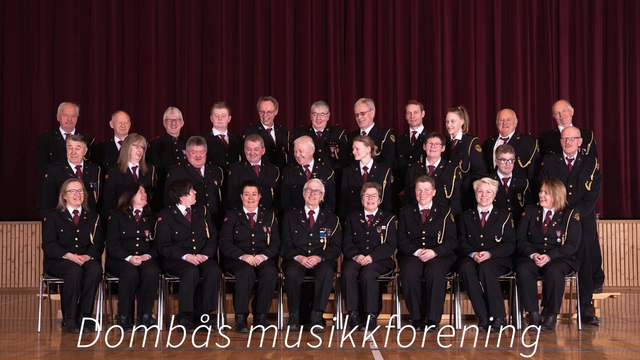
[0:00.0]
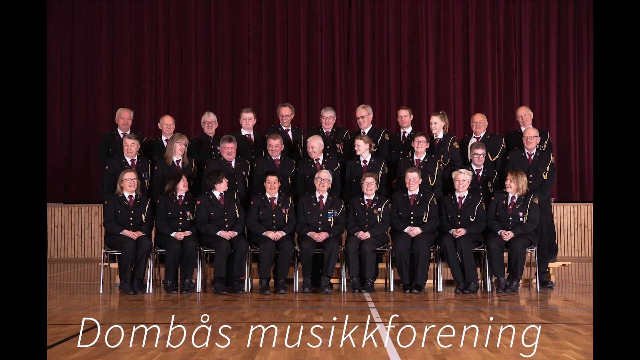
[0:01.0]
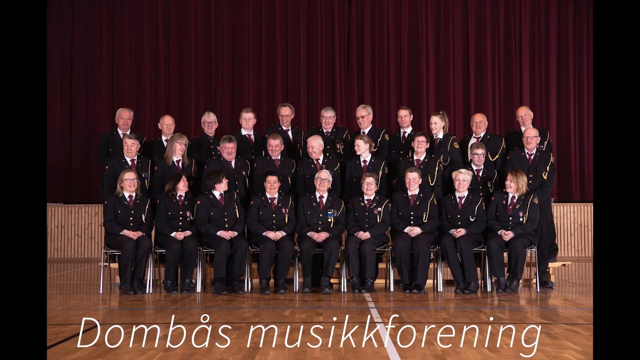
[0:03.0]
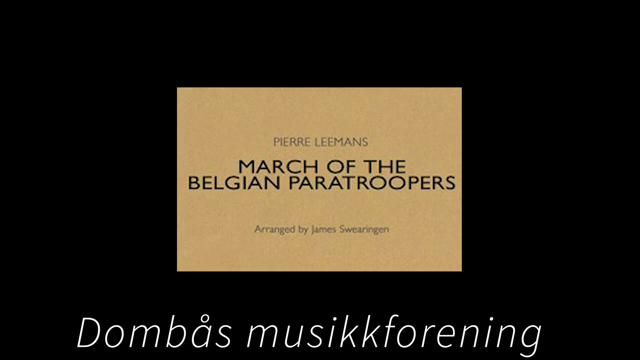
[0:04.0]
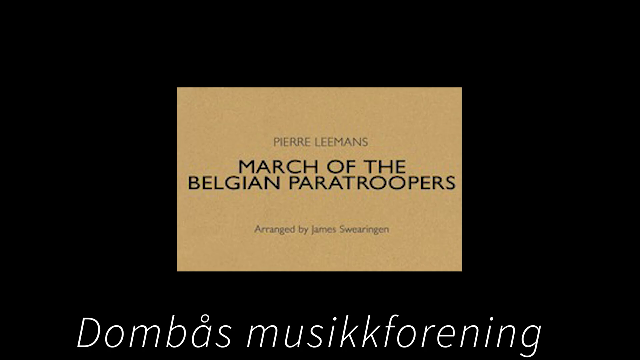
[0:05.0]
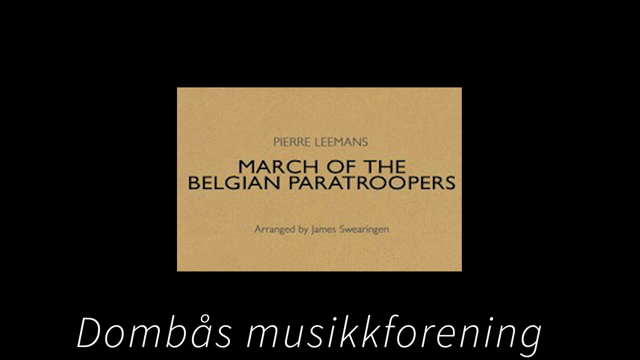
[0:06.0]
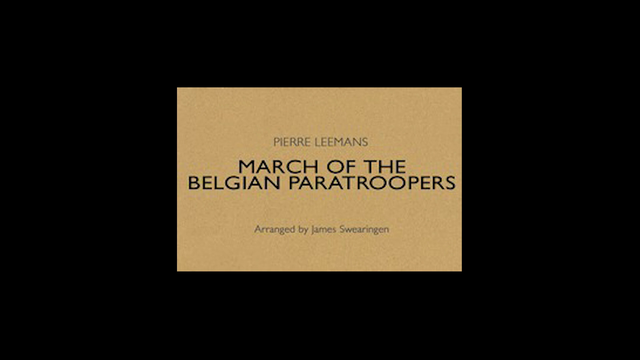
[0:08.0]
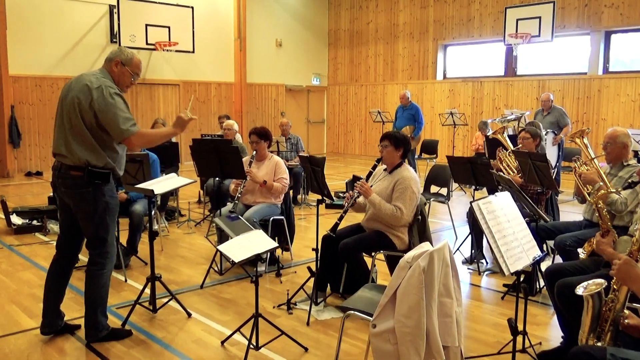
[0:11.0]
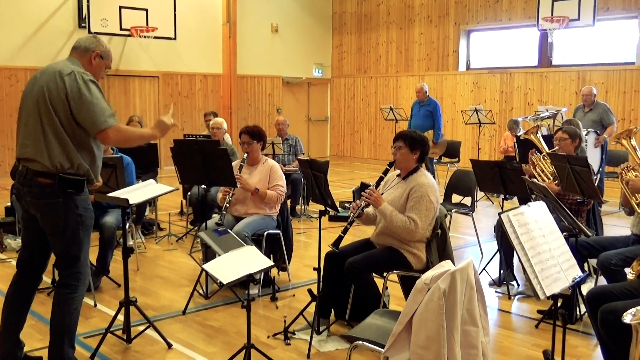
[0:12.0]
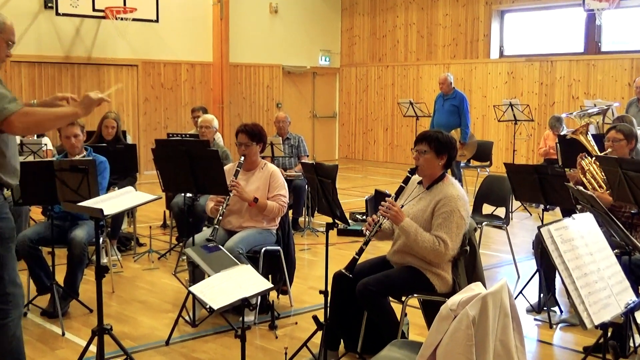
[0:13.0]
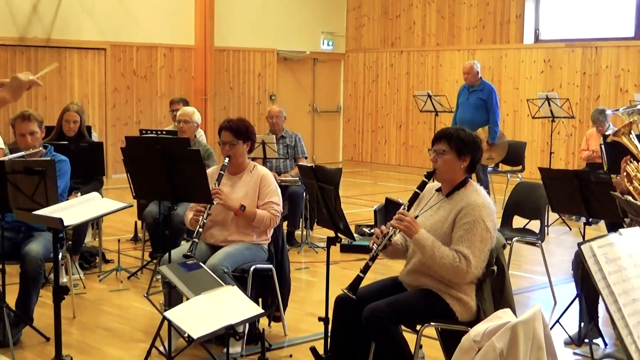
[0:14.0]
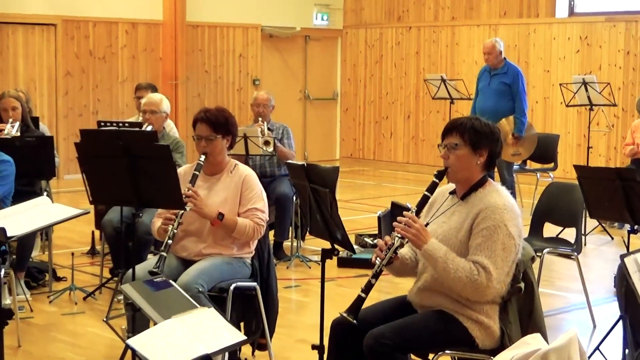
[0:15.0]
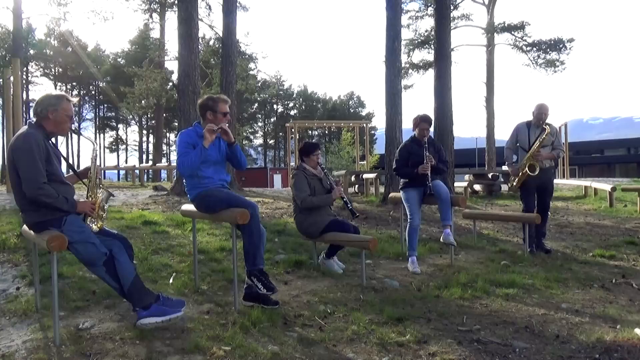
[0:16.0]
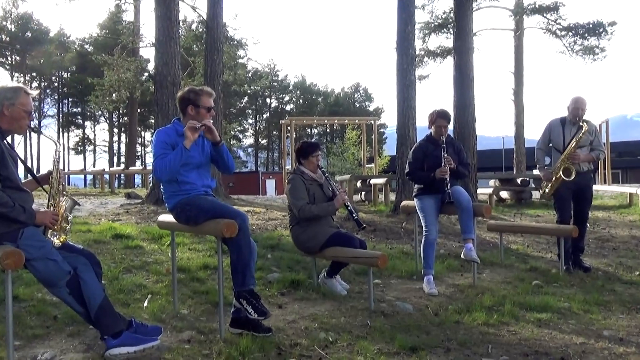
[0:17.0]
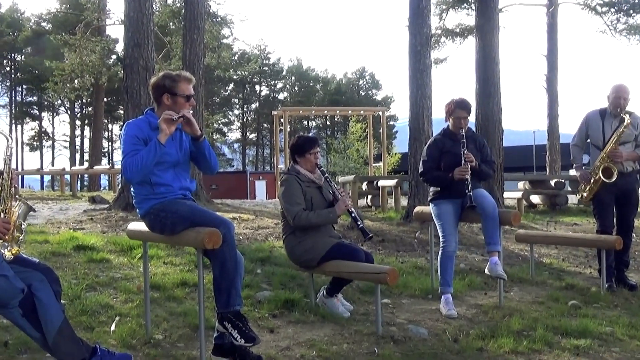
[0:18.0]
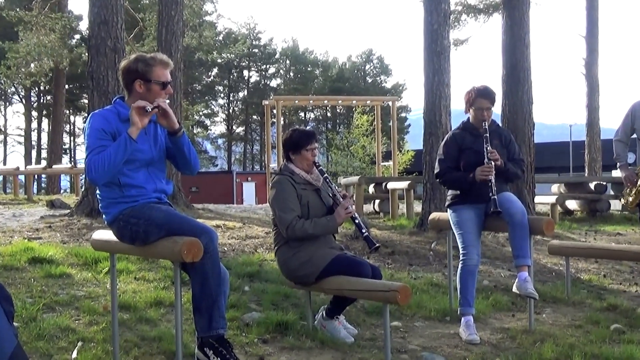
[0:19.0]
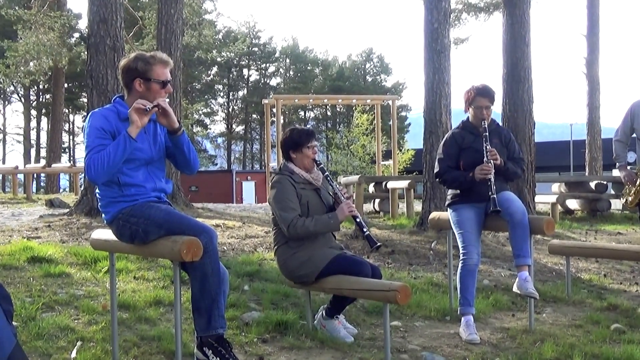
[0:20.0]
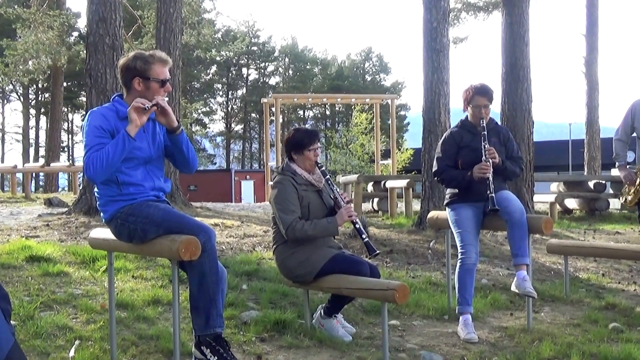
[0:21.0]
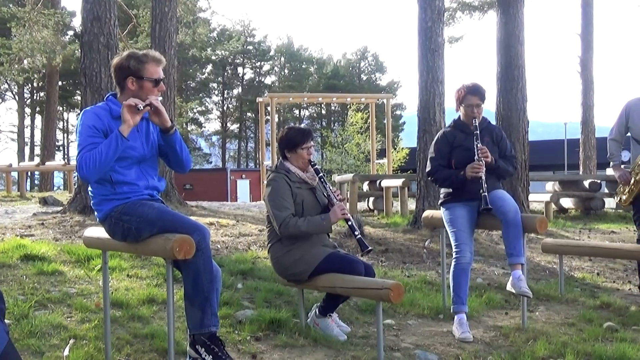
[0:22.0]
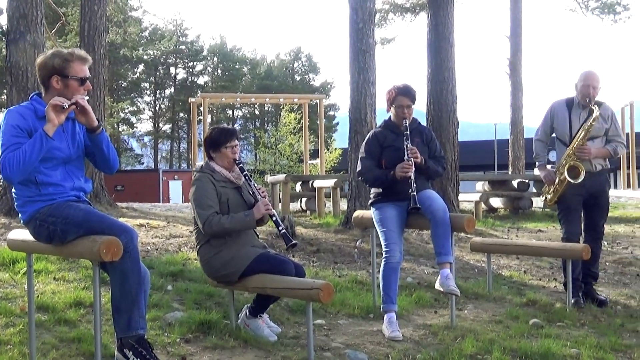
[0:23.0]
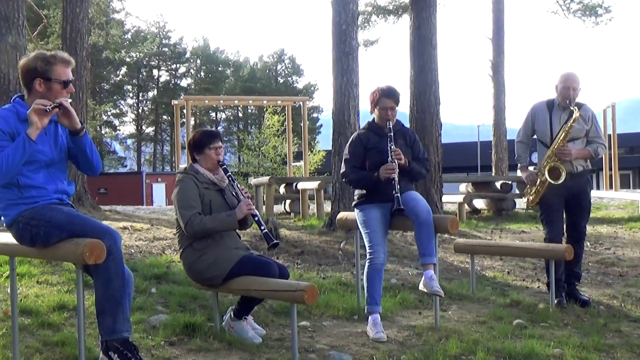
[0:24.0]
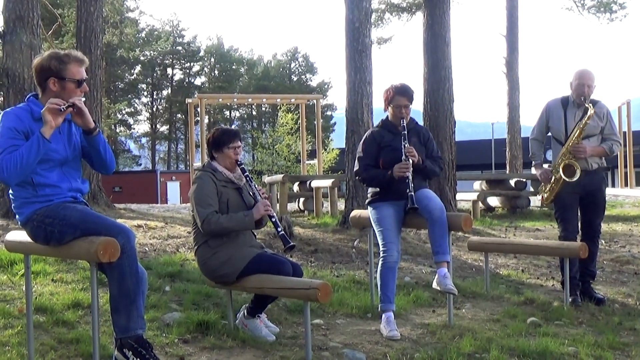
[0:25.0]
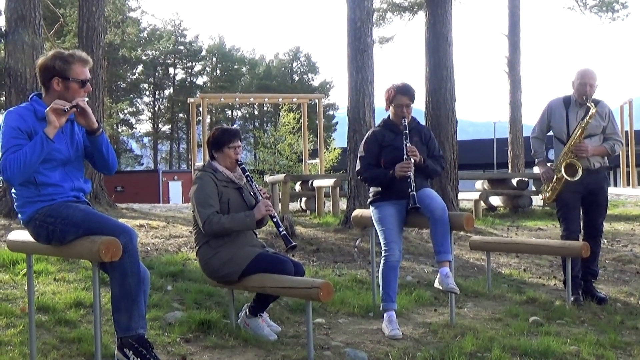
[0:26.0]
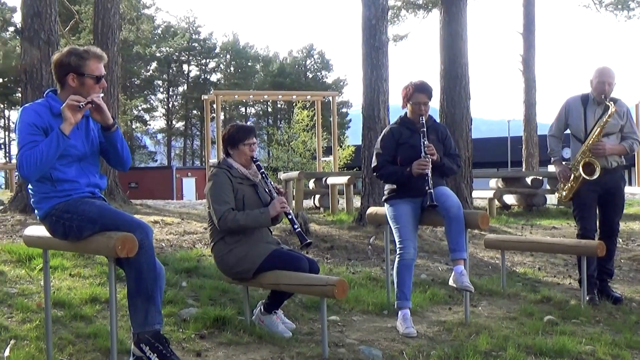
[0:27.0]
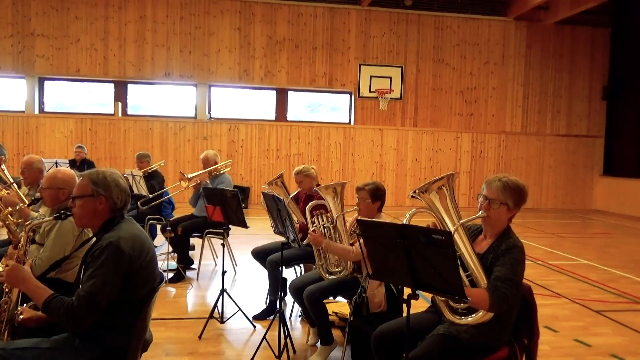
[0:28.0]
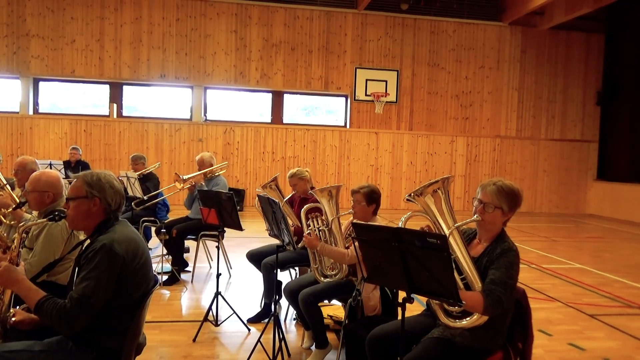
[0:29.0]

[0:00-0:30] Many people are in an auditorium, arranged in three rows and all wearing black uniforms. The first row sits on chairs, the second row is above them, and the last row is behind them. The back wall has a dark red curtain. The image changes to a black background with a gold square in the middle that reads "March of the Belgian paratroopers." The video cuts to a group of people sitting on chairs inside a basketball court playing instruments: people in the front play woodwind instruments and people in the back play brass instruments. A conductor in the front waves a conductor stick with his hands. The video zooms in on the center. It then cuts to five people sitting outside on park structures made of logs; three of them play woodwinds, and the two on the outside play saxophones.